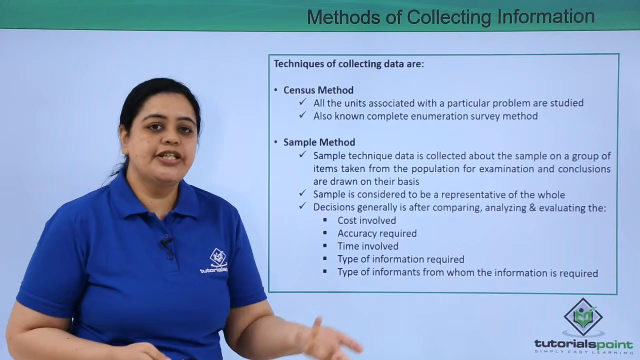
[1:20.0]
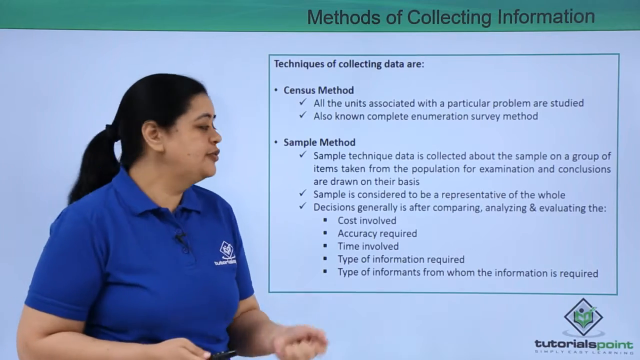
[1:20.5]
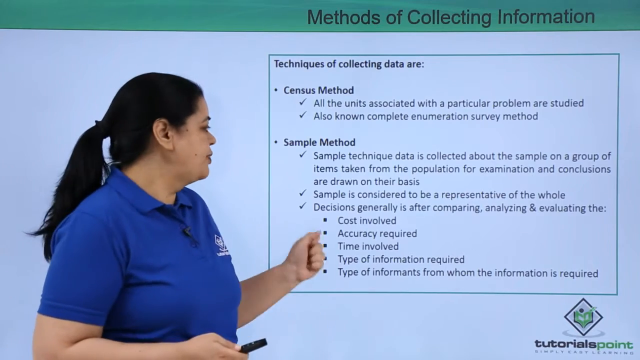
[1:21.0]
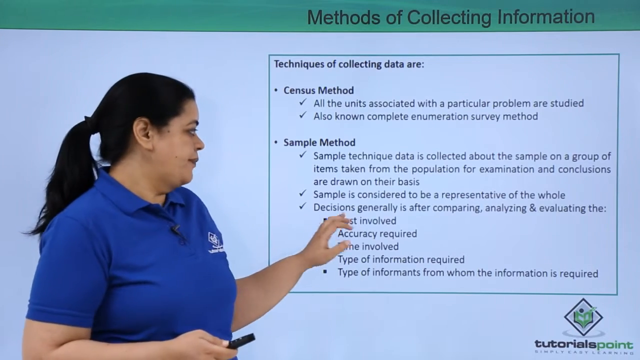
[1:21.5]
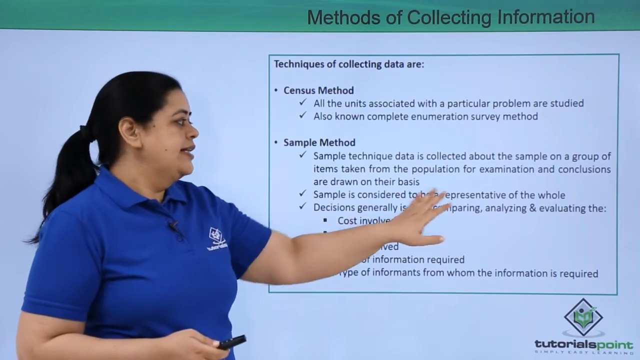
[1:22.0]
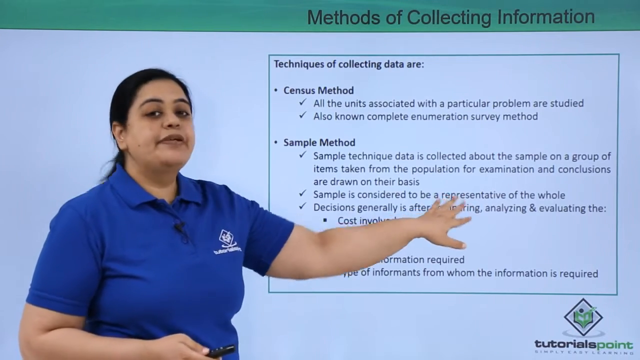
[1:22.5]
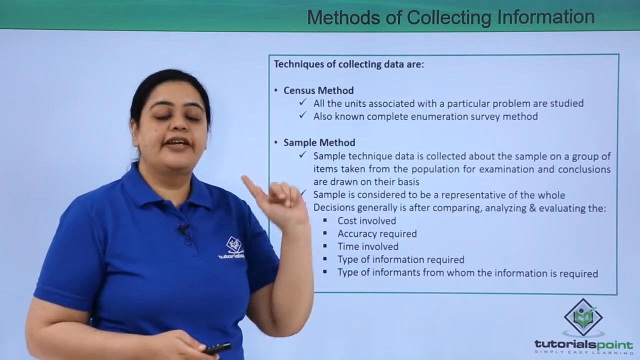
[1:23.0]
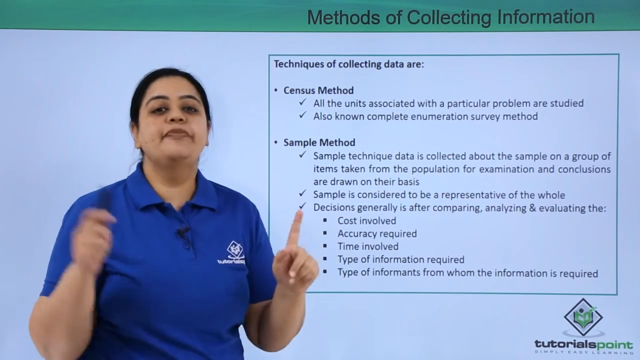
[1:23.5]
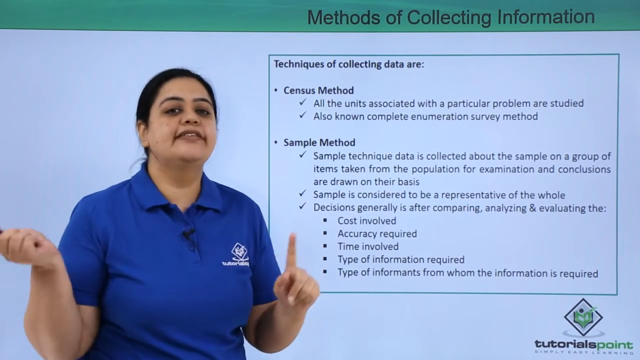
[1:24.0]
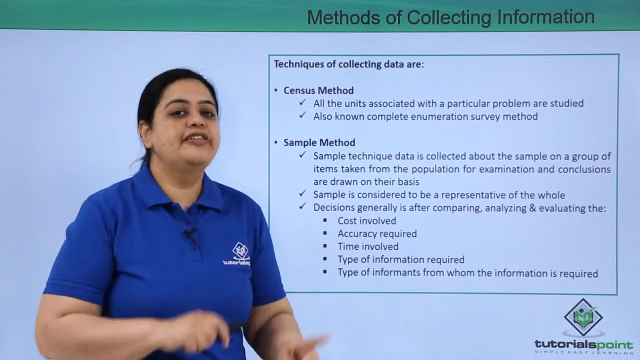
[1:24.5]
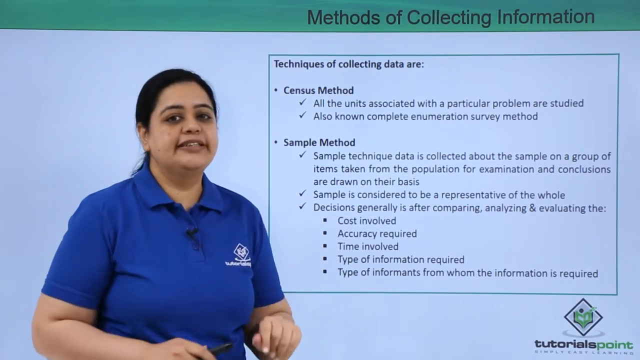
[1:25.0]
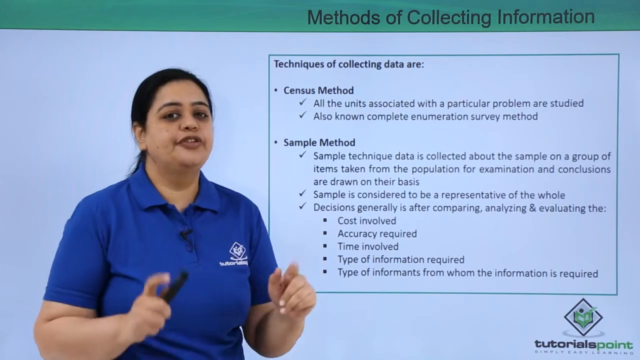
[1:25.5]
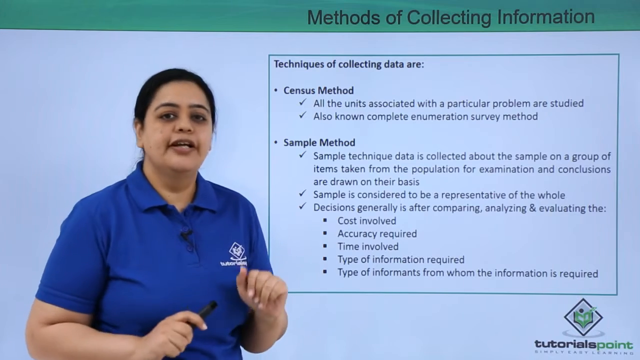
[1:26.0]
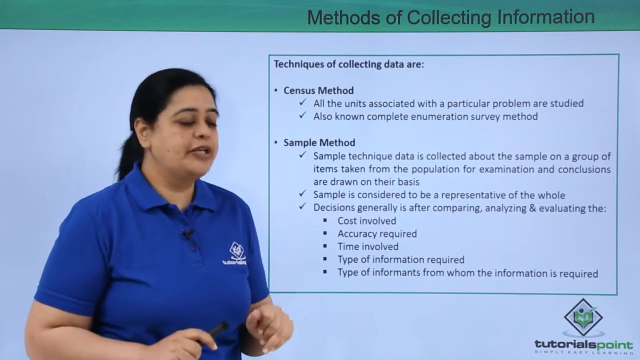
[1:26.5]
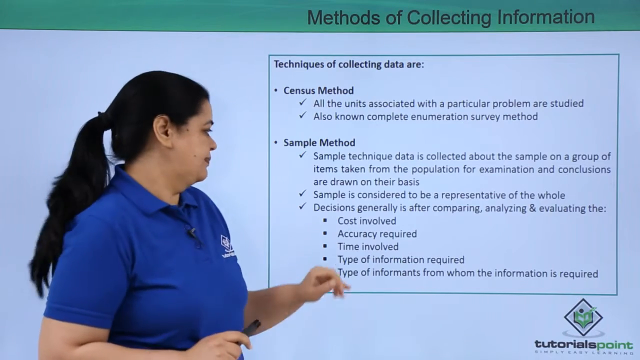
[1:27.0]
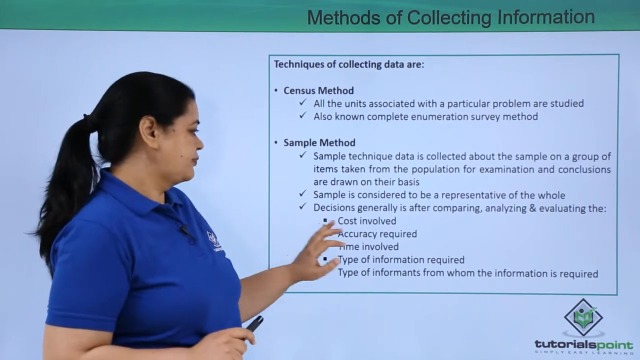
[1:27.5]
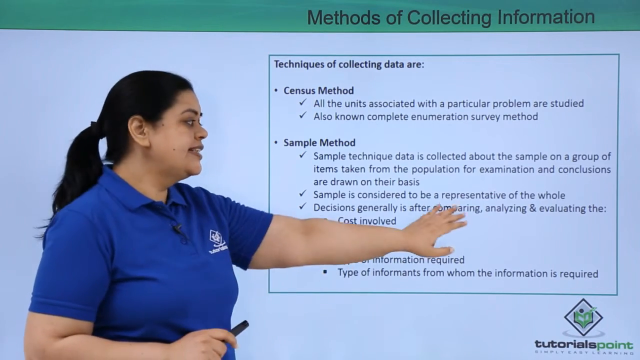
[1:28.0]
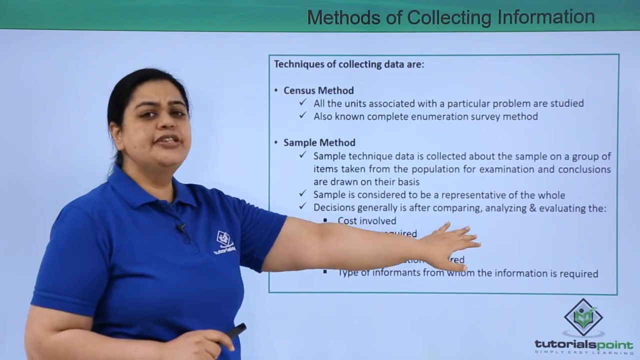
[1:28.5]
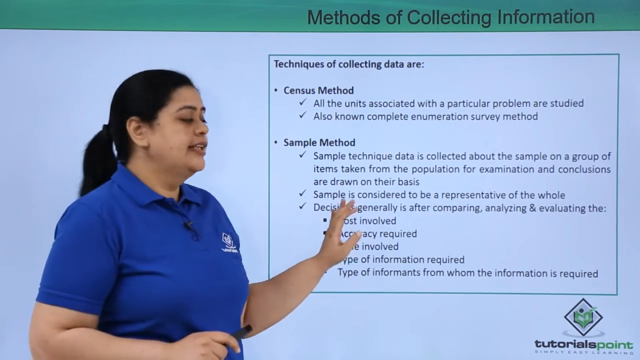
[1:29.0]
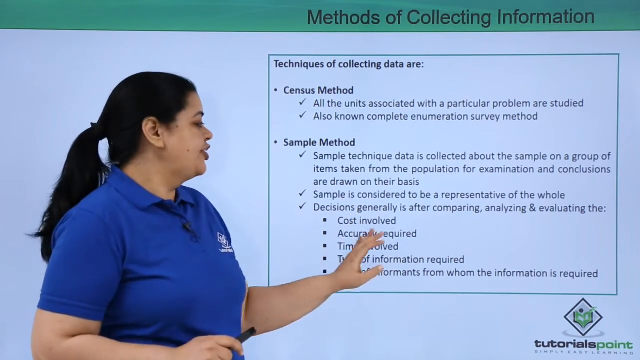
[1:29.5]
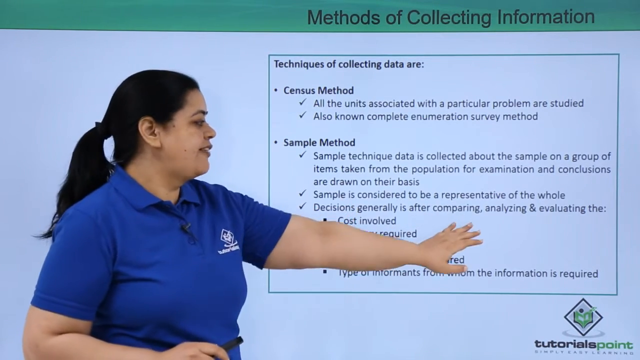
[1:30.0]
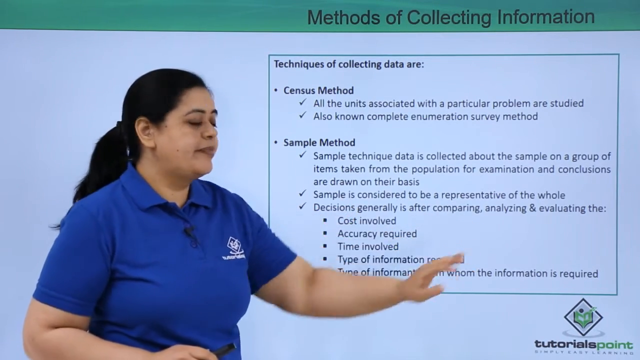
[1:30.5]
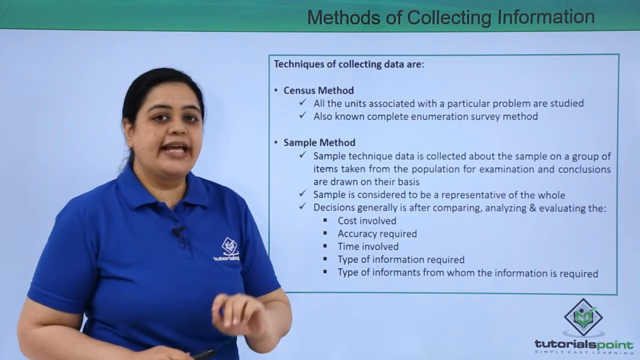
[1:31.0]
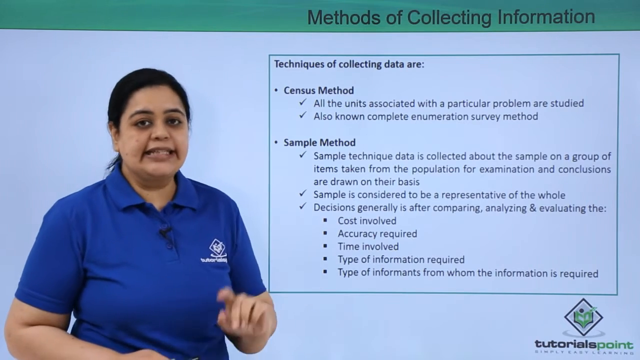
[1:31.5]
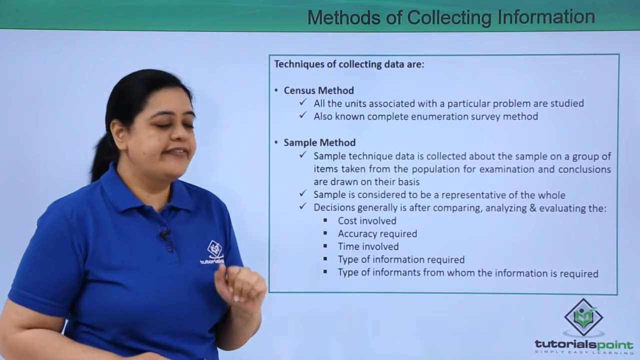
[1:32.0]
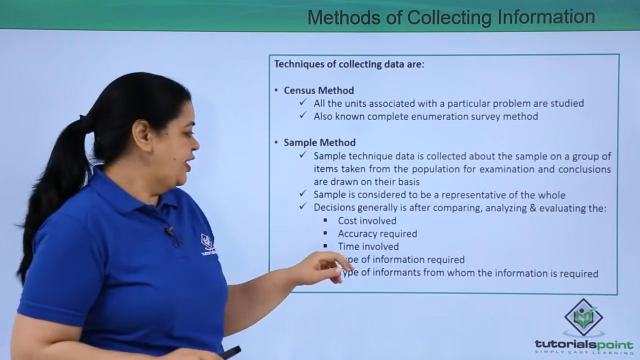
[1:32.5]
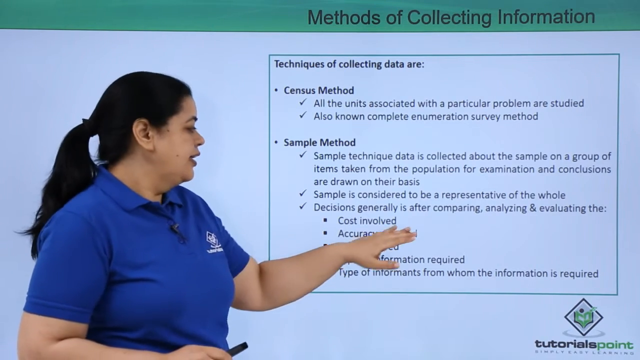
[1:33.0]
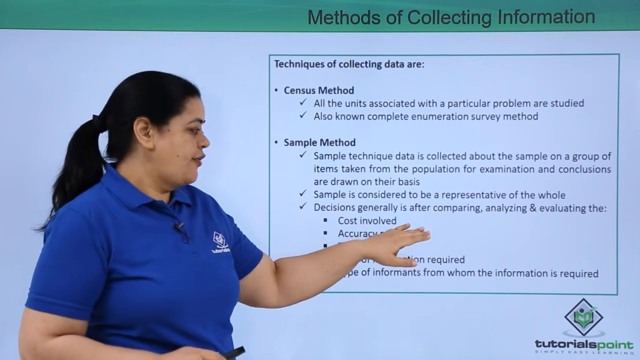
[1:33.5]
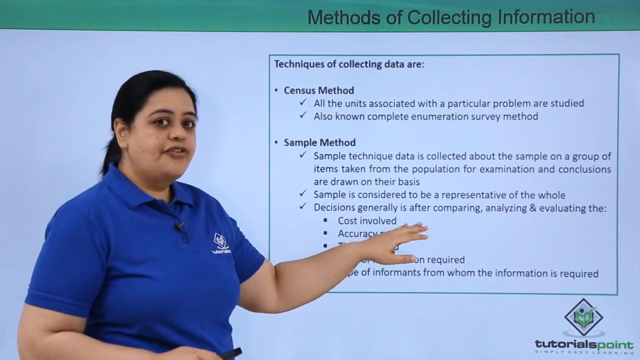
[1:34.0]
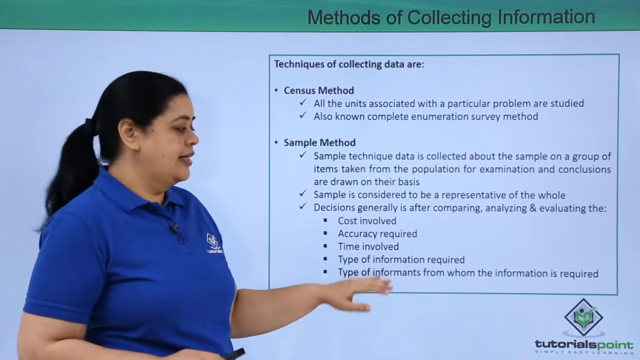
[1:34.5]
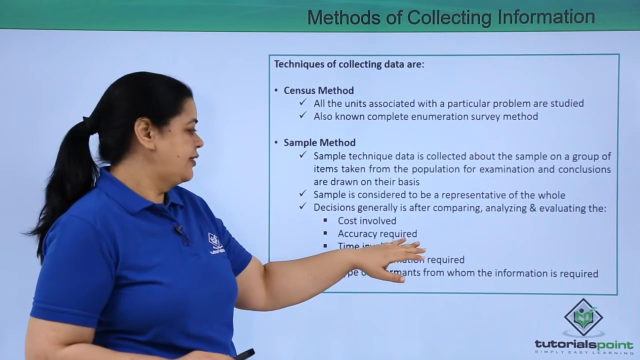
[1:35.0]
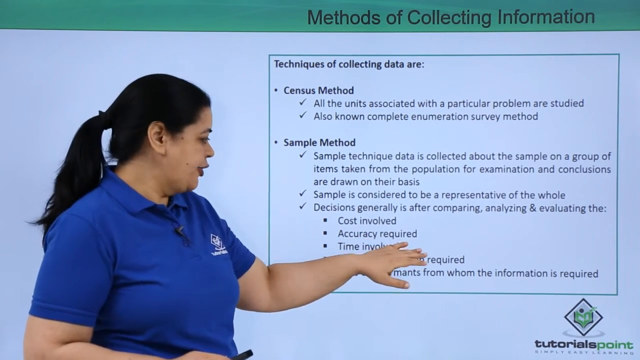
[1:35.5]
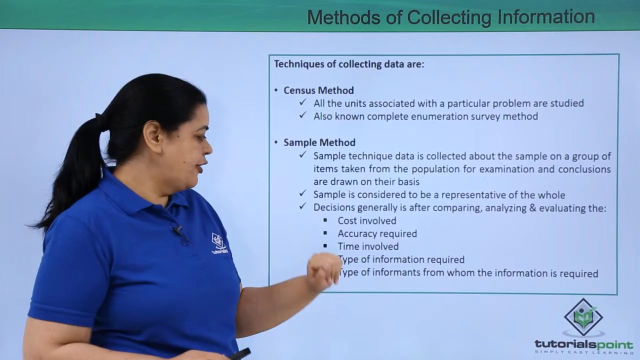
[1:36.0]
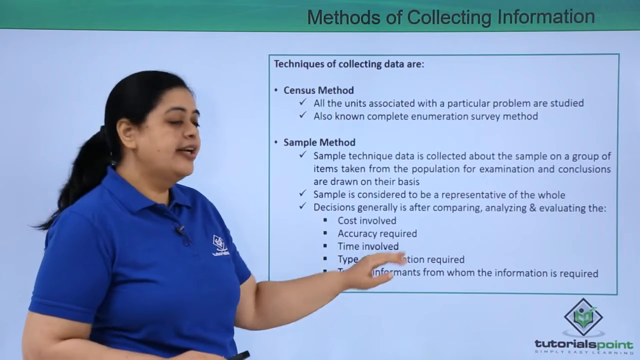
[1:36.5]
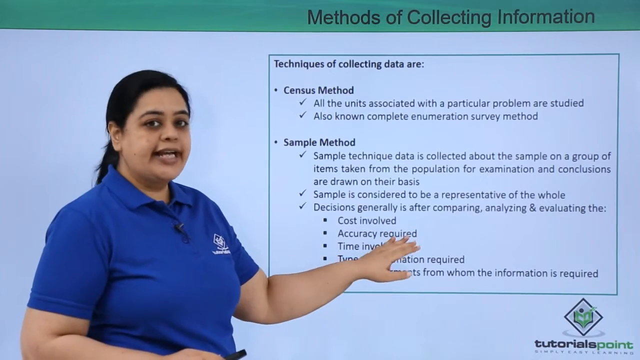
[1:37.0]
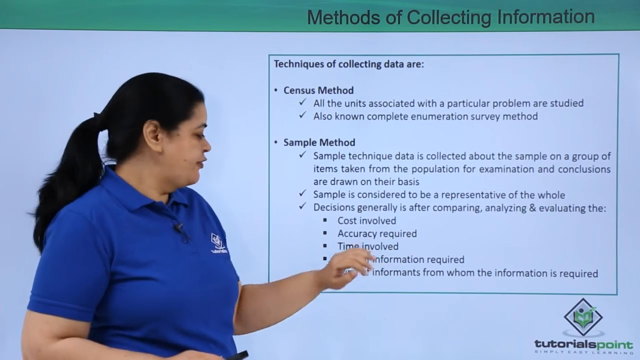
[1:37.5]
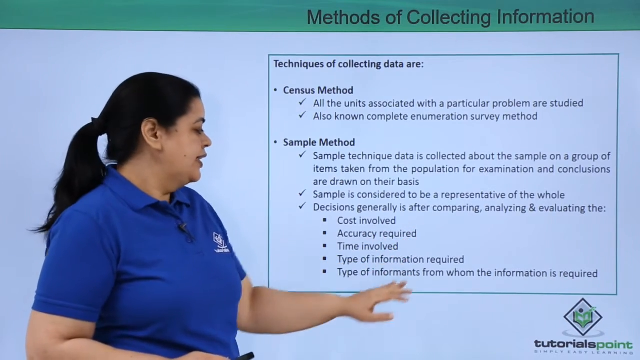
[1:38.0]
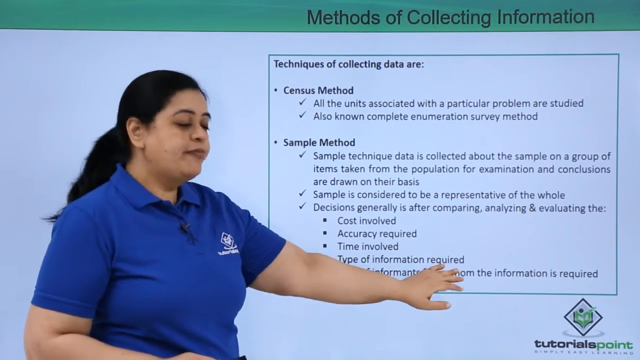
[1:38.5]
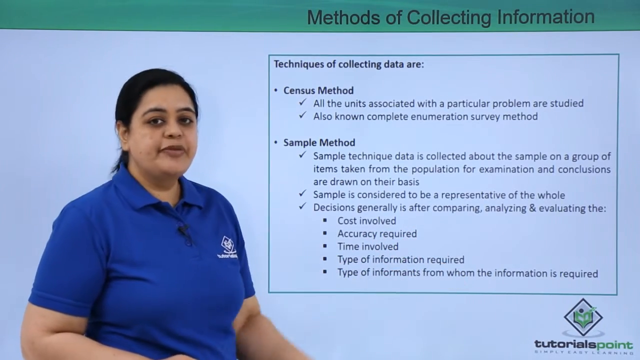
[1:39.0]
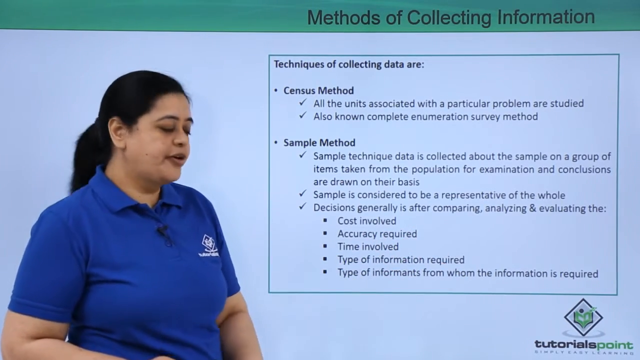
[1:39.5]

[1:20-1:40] The woman continues with the lecture about the methods of collecting information. She wears a darker blue polo shirt that is not navy, possibly royal blue, with Tutorials Point apparently printed on the upper right part of the shirt. She might have a small black microphone clipped to her shirt. Her long dark hair is pulled back in a low ponytail. She is wearing little or no makeup, possibly lipstick. She gestures and points to several bullet points. She speaks in front of a white PowerPoint presentation in a room that could be a classroom or a building. The video does not glitch.